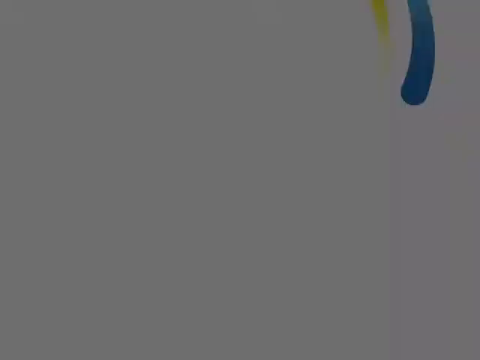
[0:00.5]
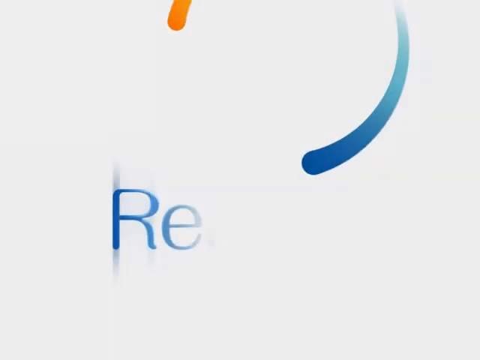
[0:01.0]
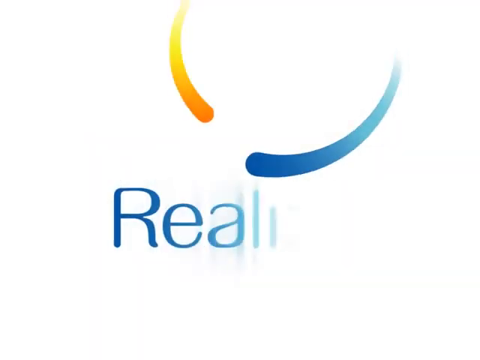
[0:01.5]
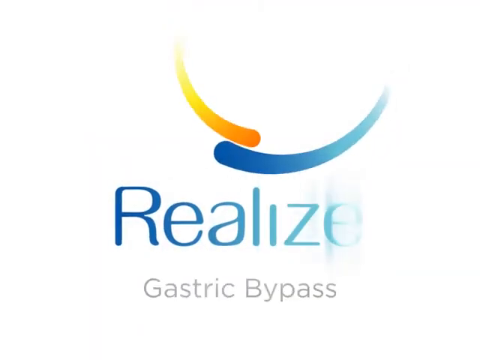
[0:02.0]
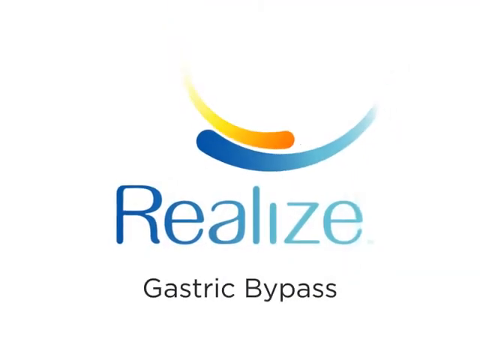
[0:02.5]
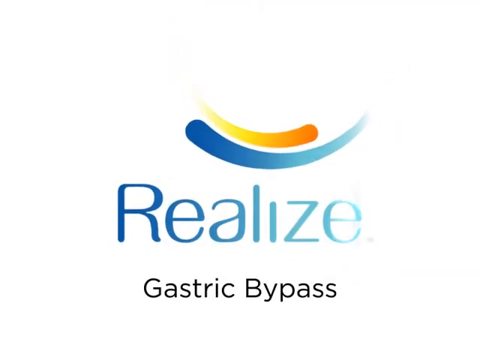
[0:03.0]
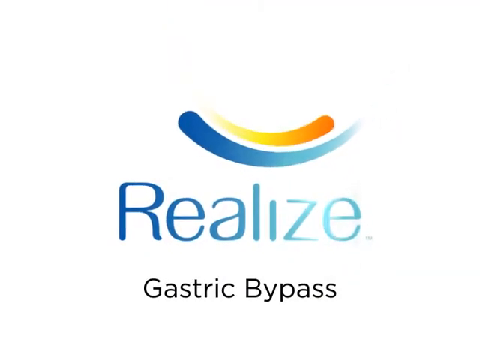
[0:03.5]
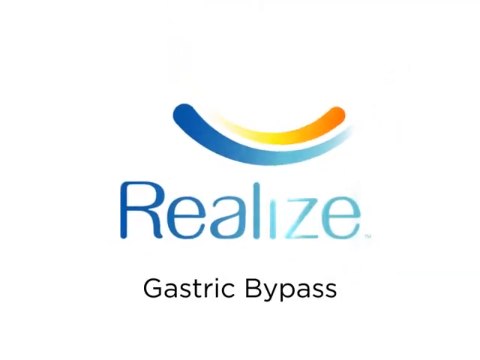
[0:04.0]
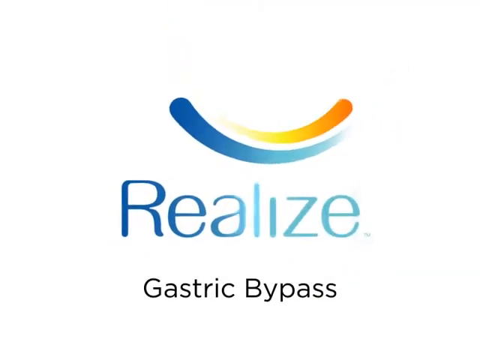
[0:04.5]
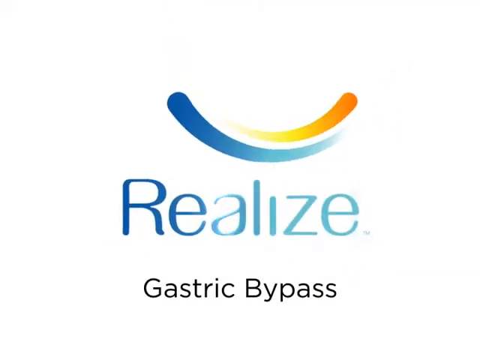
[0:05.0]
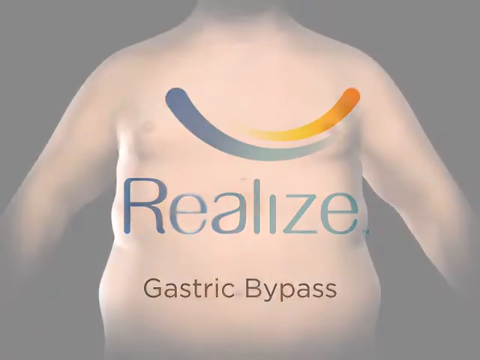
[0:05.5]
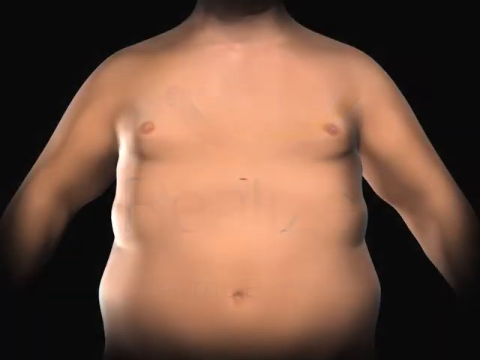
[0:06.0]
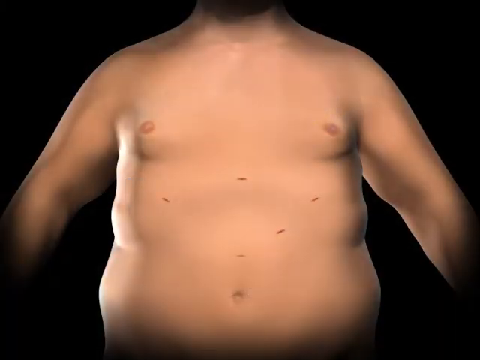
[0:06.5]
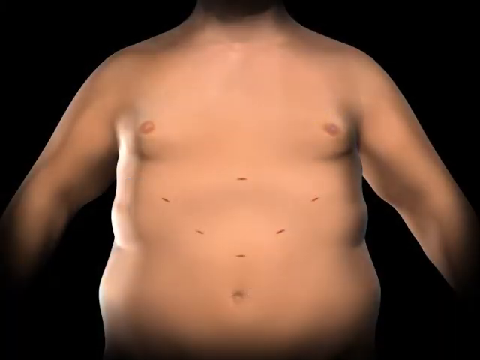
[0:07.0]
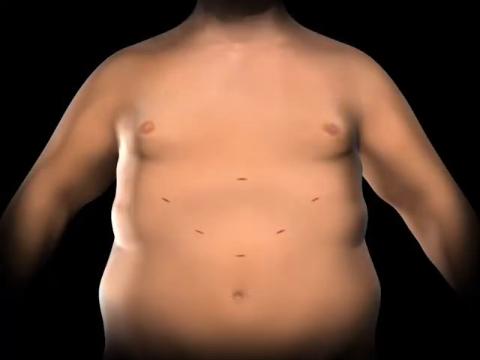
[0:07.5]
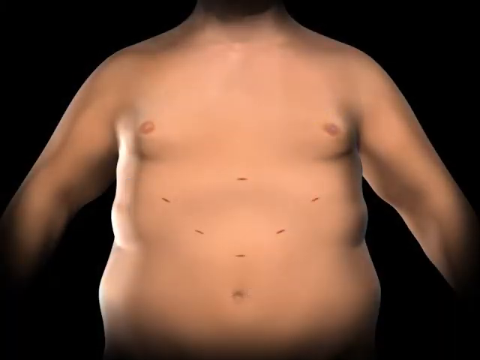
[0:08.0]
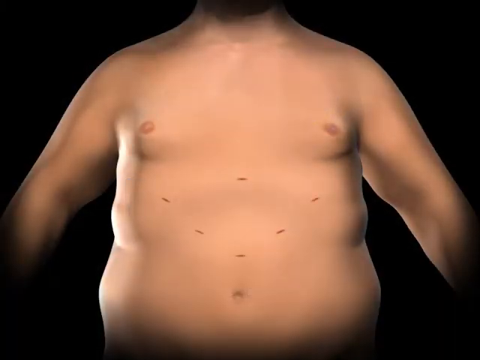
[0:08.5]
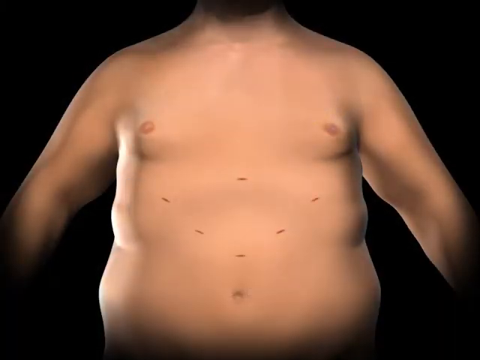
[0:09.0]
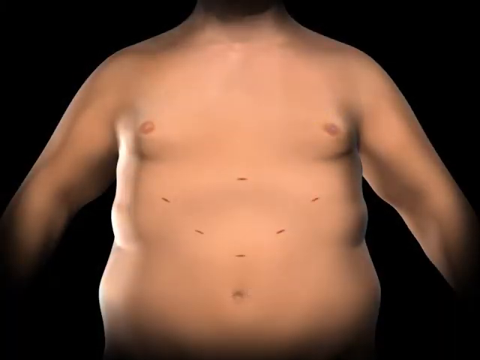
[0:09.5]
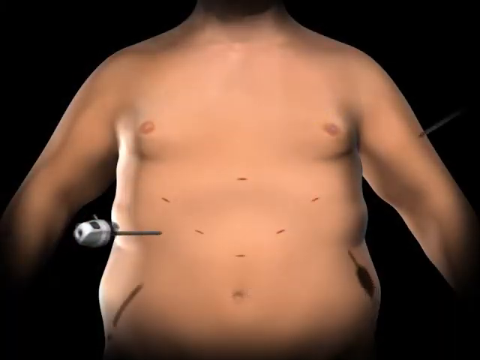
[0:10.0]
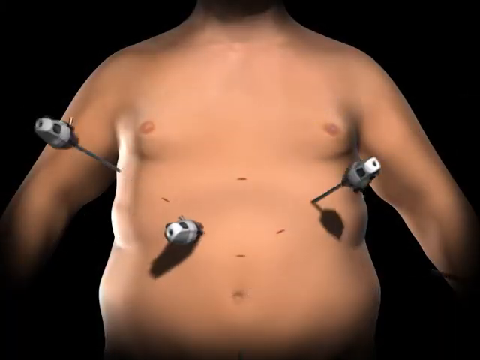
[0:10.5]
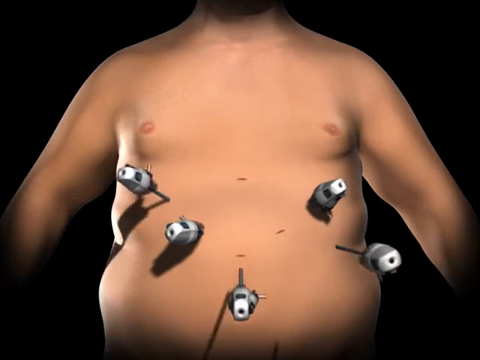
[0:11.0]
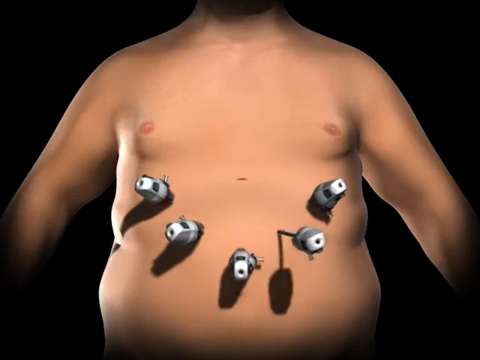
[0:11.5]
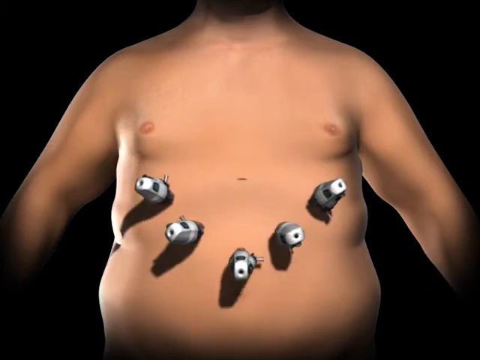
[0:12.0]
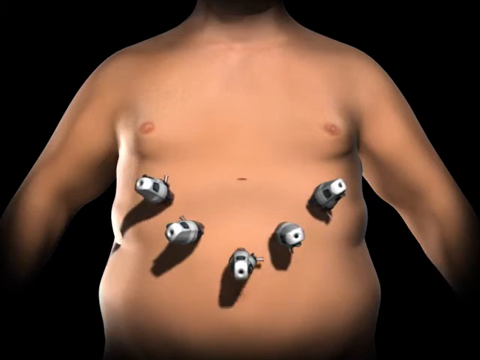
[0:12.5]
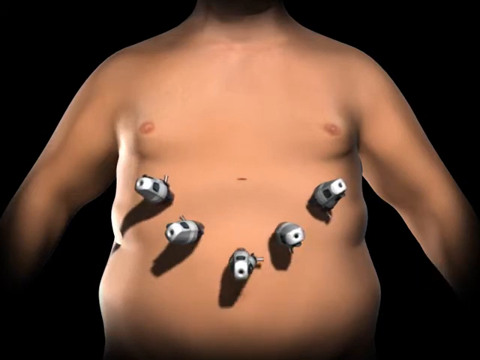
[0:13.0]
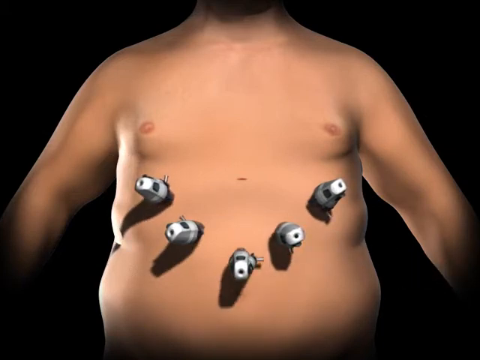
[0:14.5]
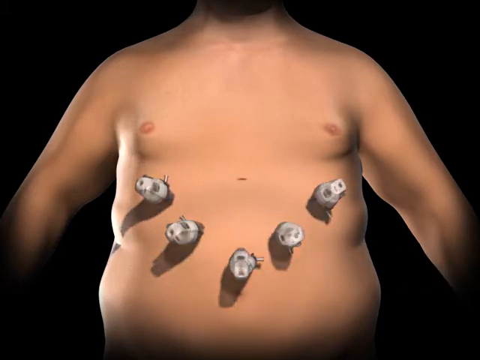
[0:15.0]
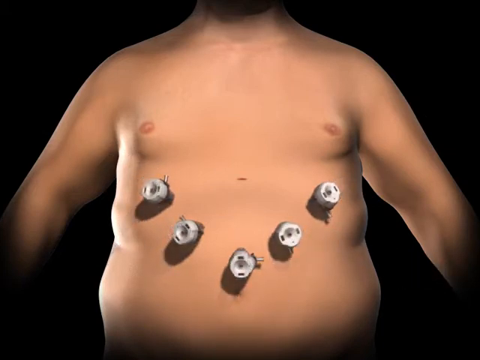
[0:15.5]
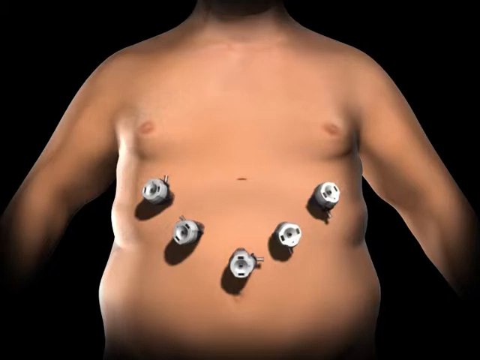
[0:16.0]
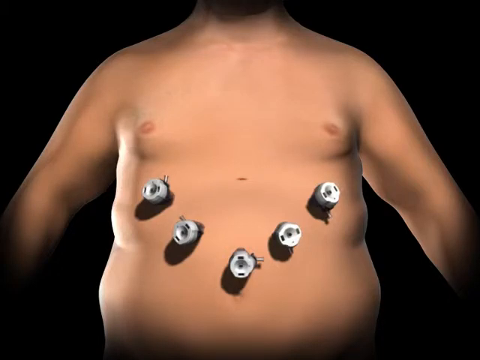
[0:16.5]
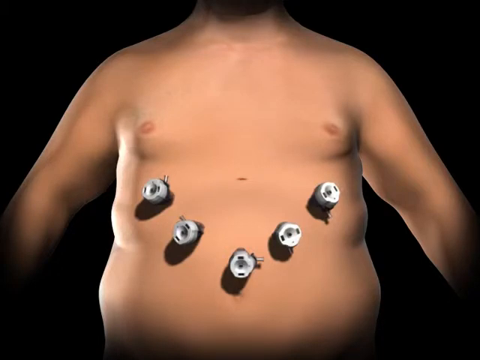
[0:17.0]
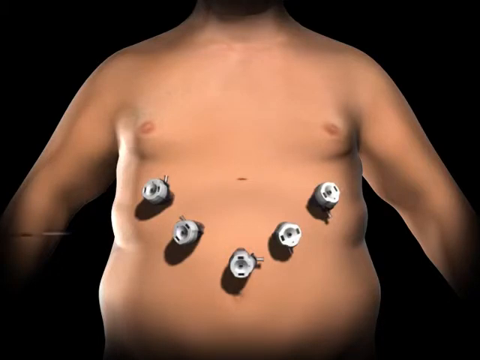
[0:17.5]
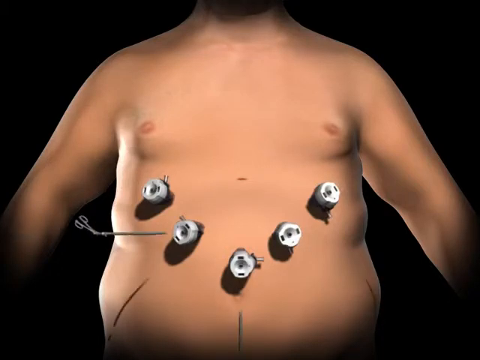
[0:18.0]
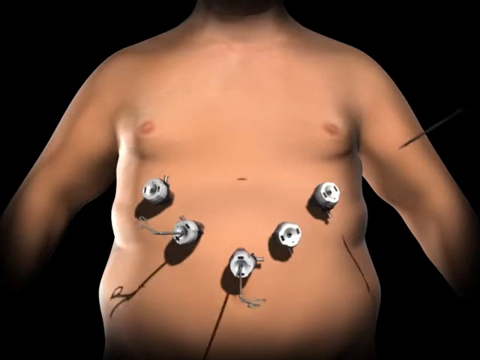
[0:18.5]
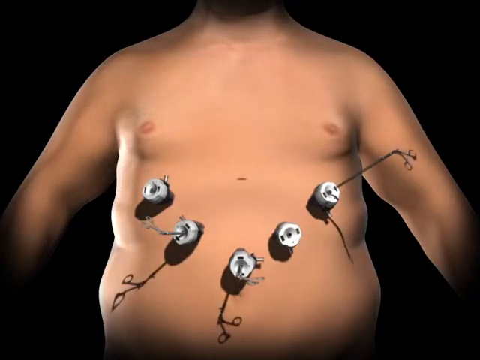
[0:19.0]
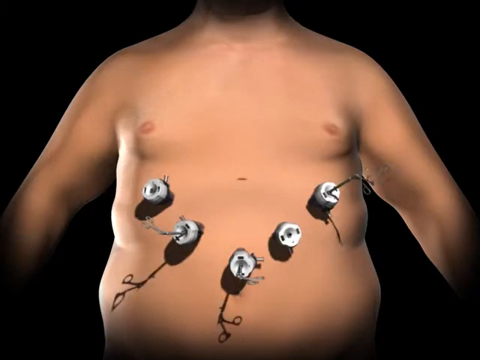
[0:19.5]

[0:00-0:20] A white background shows blue text that says "realize gastric bypass." Next comes a sort of animation of a large individual with plenty of fat, depicting a gastric bypass and specifically how it is done: the animation shows this person's stomach, with a few different holes and sort of metal objects being placed into the stomach. It then transitions to a screen showing the inner, kind of abdominal, cavity. Only this one kind of subject appears, a sort of large male individual whose head is not visible. No other subjects are seen, and after the intro screen the setting does not really change from this one screen.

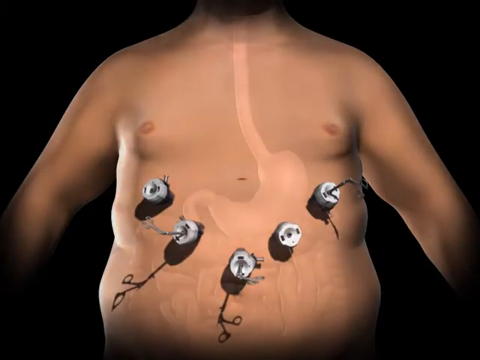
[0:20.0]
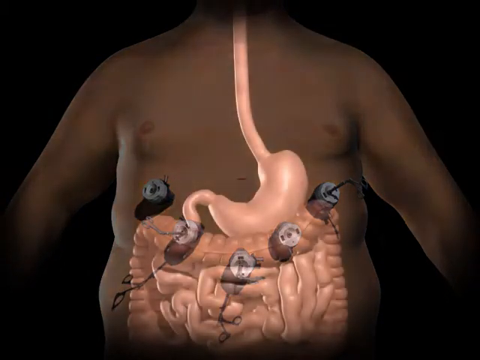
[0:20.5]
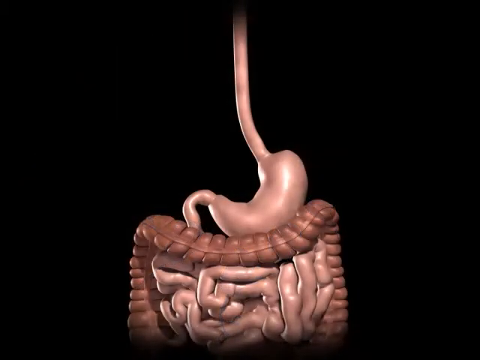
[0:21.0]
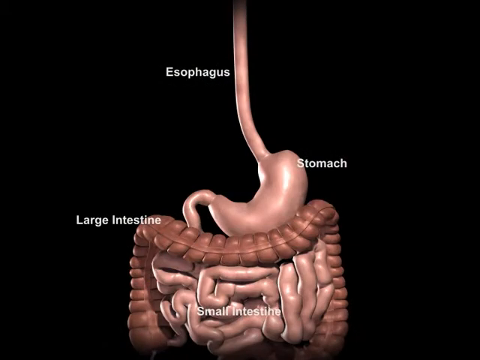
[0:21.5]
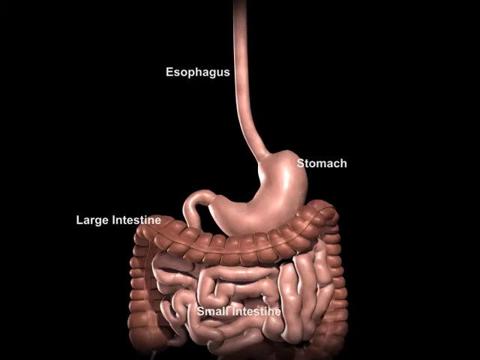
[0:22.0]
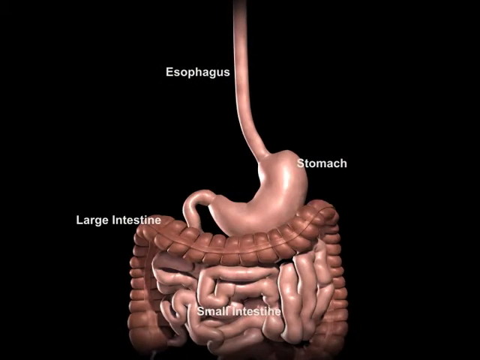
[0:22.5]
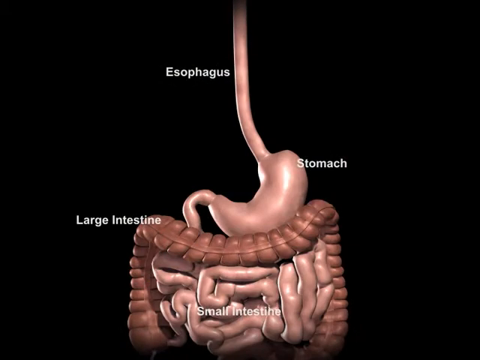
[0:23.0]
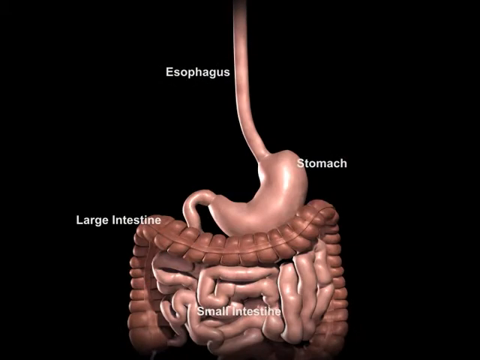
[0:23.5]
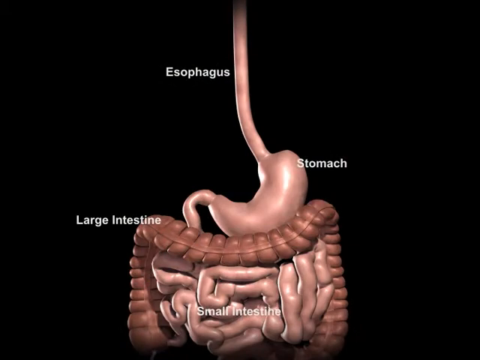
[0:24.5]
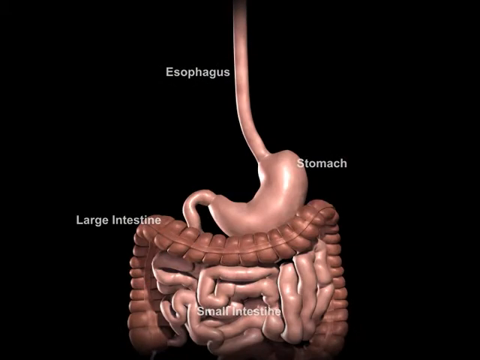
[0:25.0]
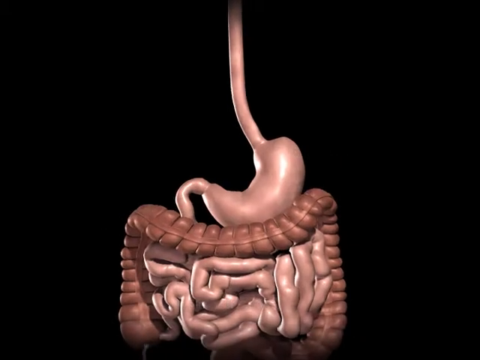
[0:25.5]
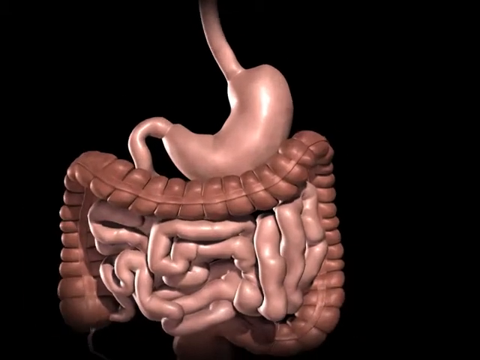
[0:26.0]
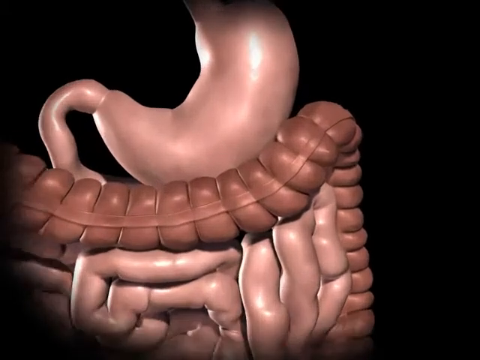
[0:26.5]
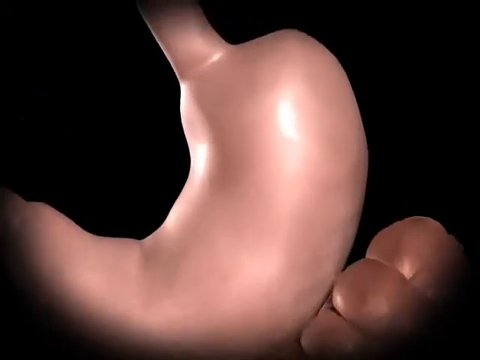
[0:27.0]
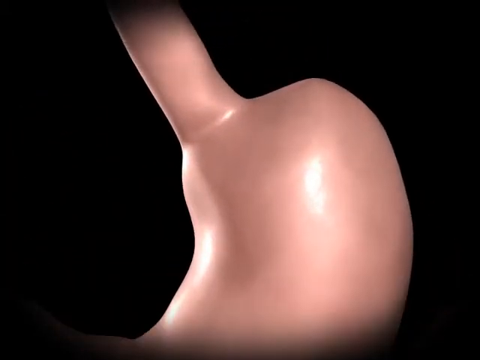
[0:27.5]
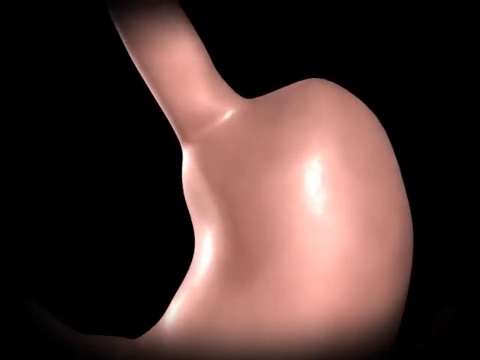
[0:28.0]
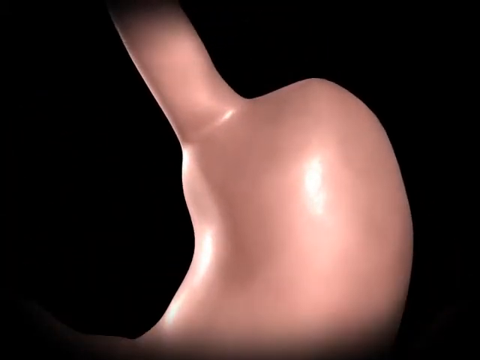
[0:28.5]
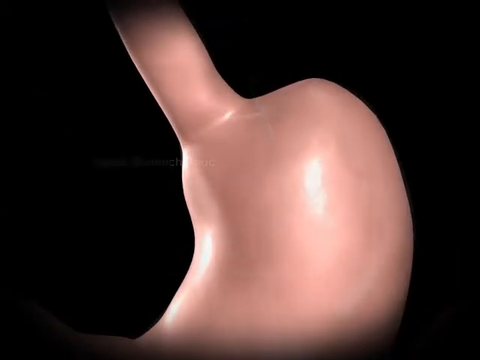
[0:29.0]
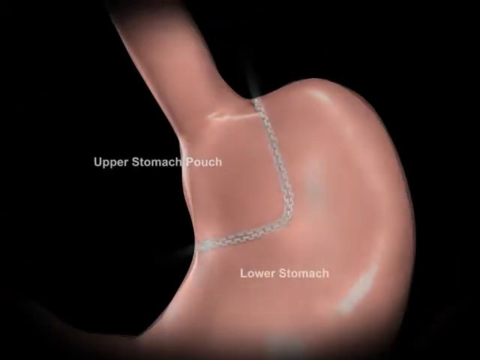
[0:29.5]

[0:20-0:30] The inside of the abdominal cavity is shown on a sort of black background, with the esophagus, the stomach, the large intestines and the small intestines visible. The view then zooms in on the stomach specifically, with the upper stomach pouch and the lower stomach both visible, in a sort of informational, animated-style depiction of the abdominal cavity about gastric bypasses.